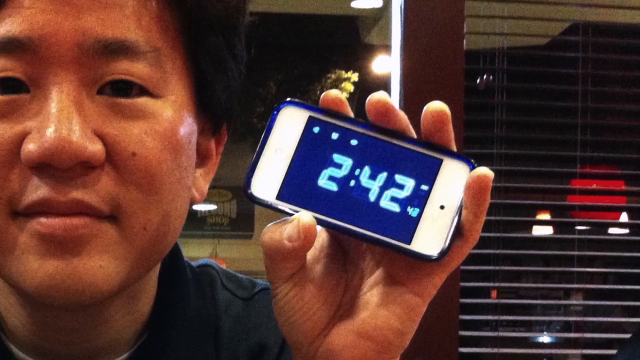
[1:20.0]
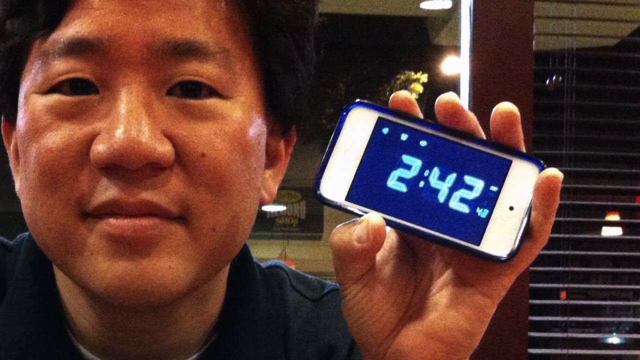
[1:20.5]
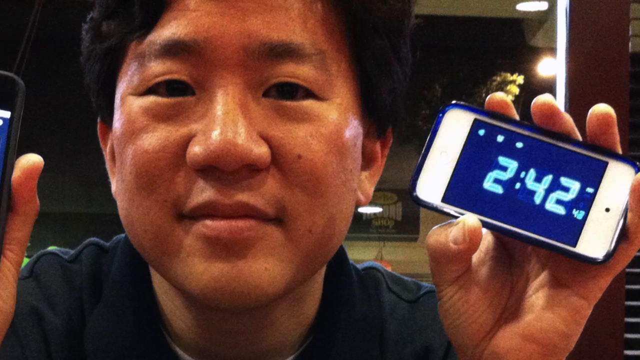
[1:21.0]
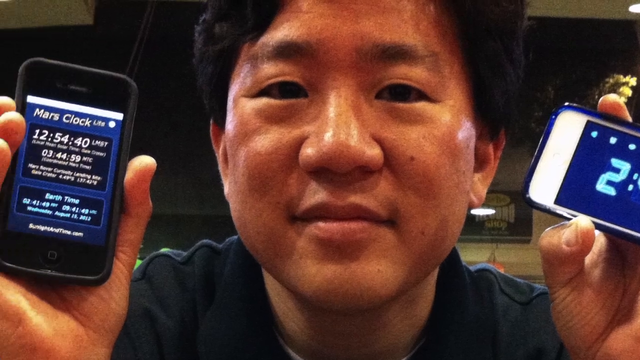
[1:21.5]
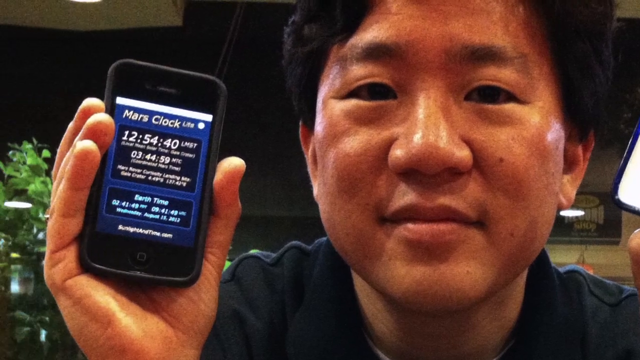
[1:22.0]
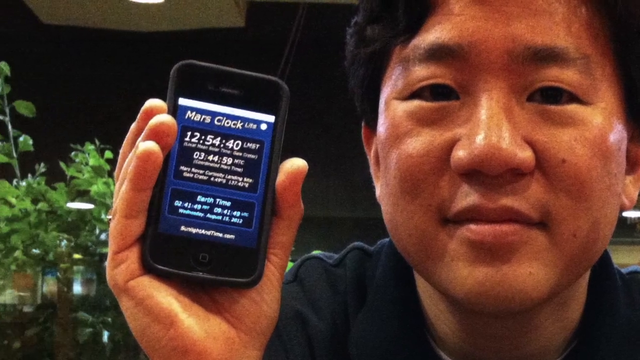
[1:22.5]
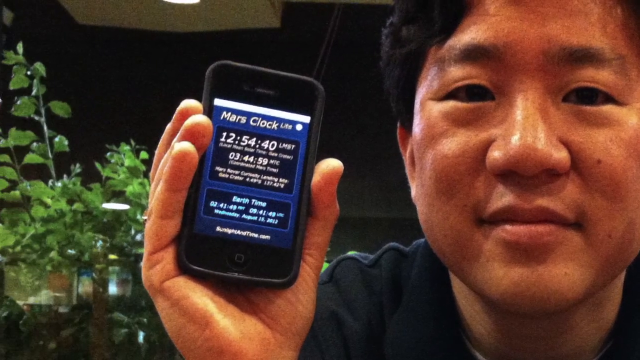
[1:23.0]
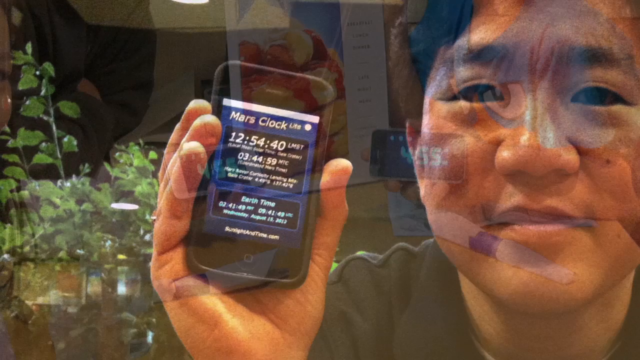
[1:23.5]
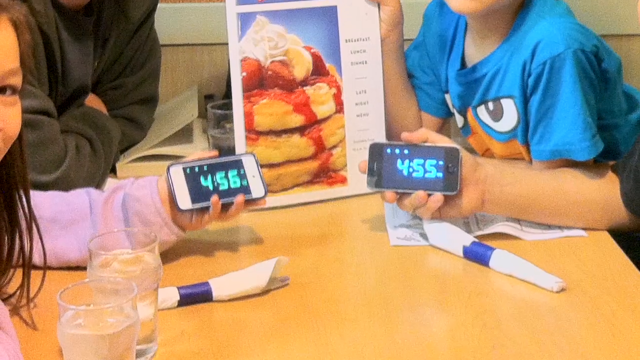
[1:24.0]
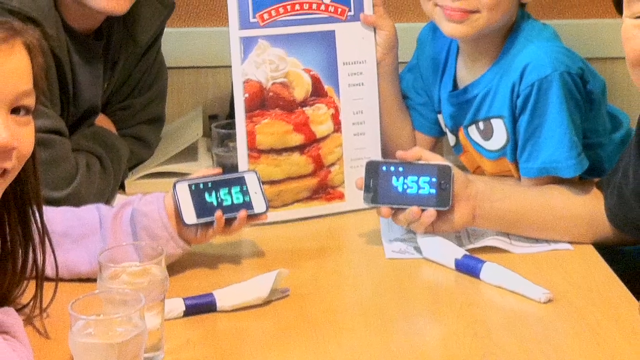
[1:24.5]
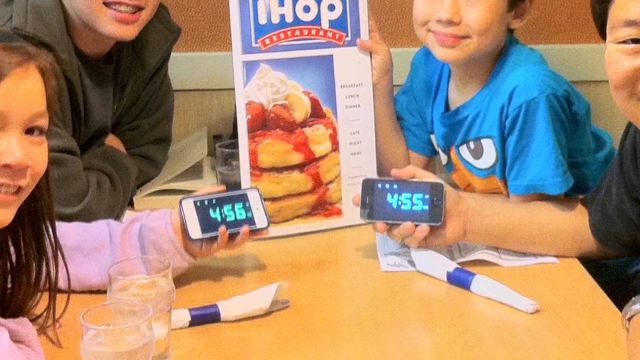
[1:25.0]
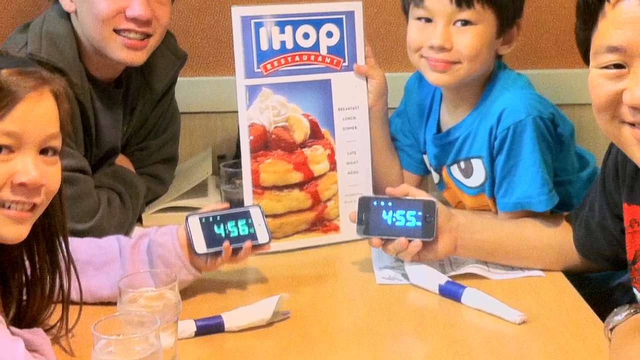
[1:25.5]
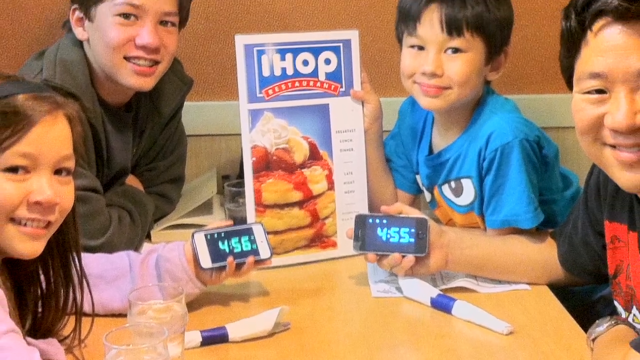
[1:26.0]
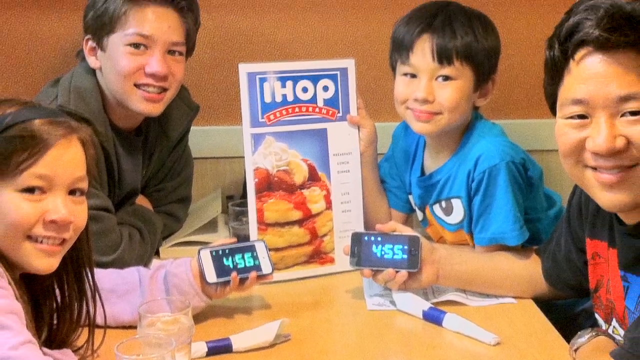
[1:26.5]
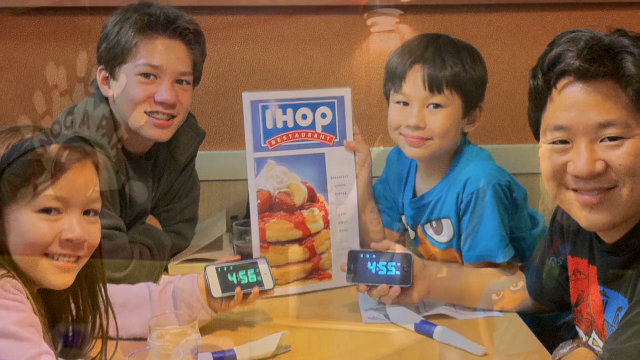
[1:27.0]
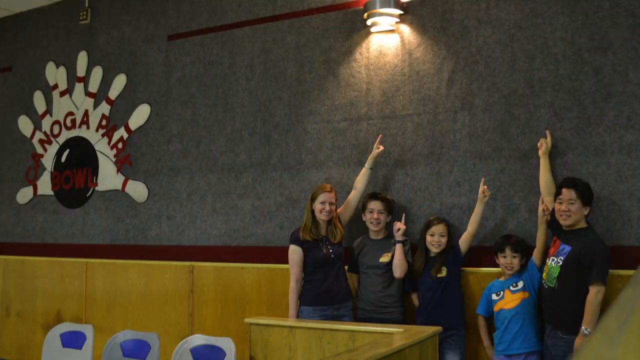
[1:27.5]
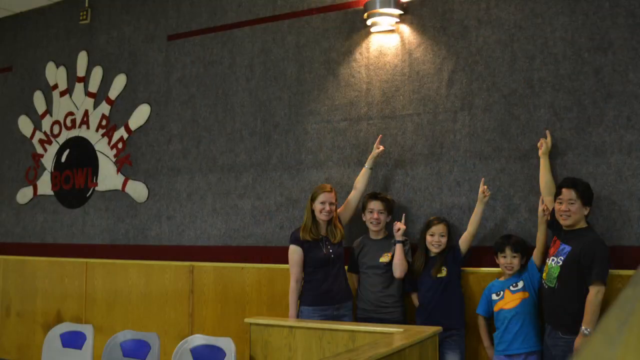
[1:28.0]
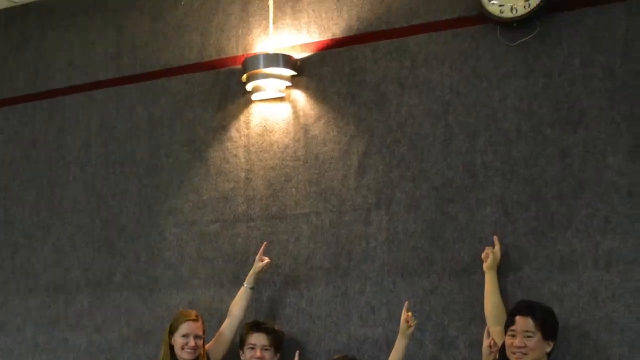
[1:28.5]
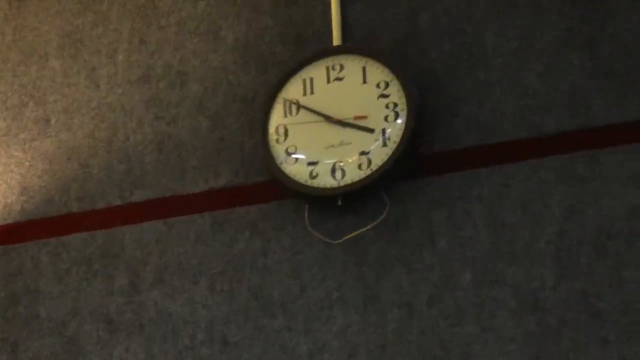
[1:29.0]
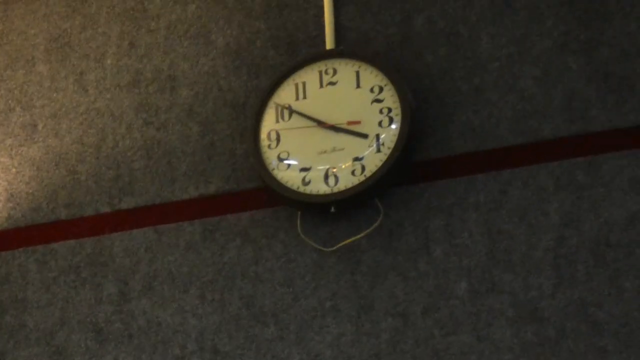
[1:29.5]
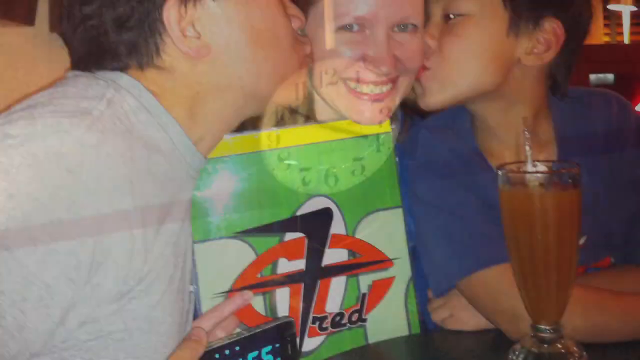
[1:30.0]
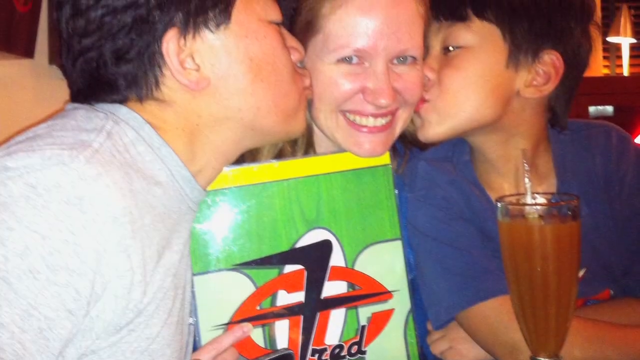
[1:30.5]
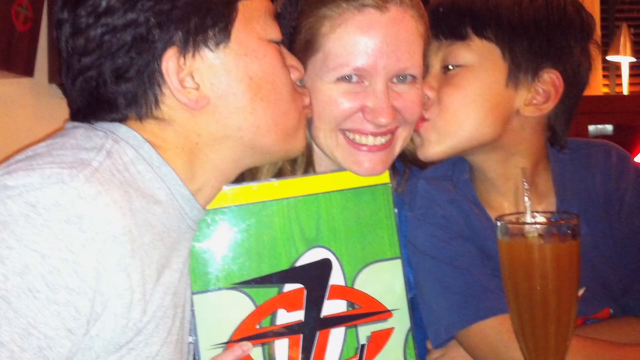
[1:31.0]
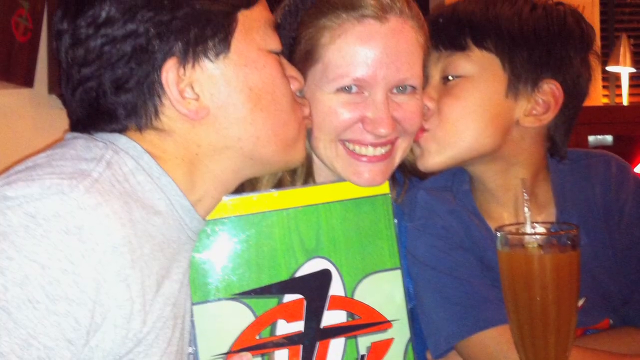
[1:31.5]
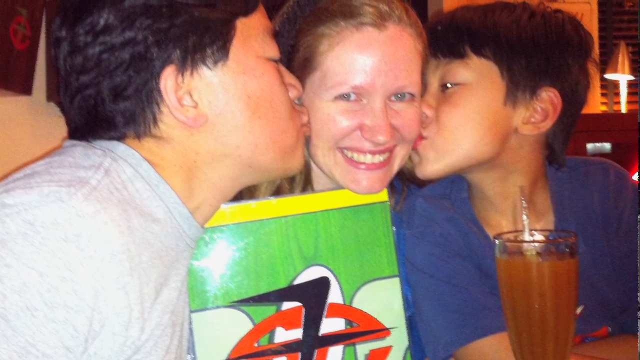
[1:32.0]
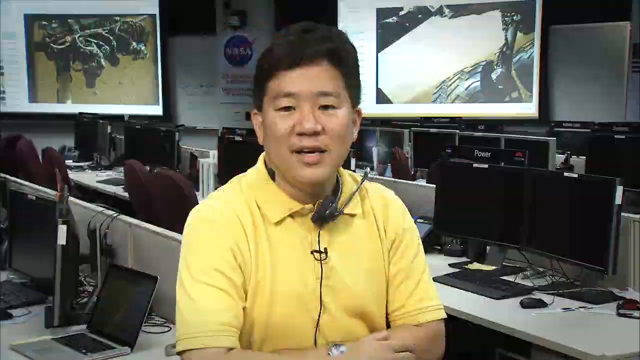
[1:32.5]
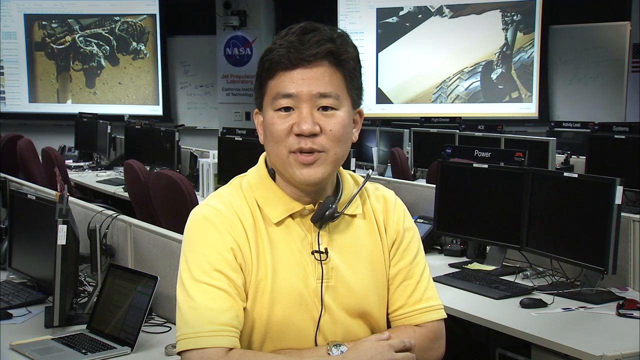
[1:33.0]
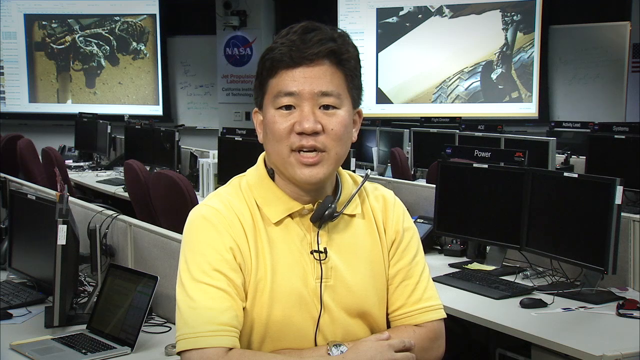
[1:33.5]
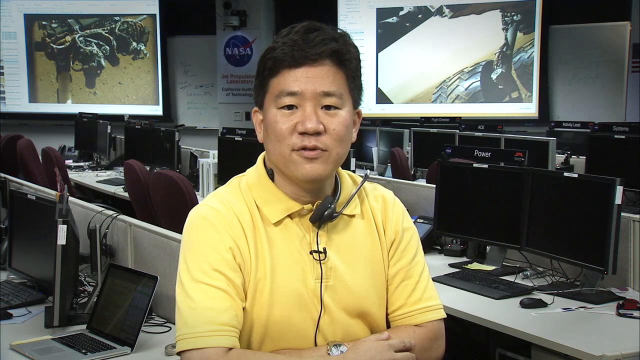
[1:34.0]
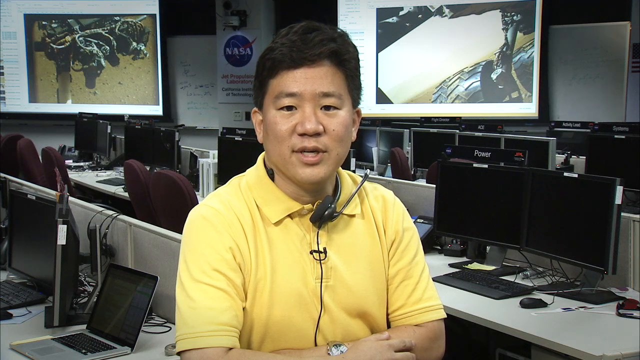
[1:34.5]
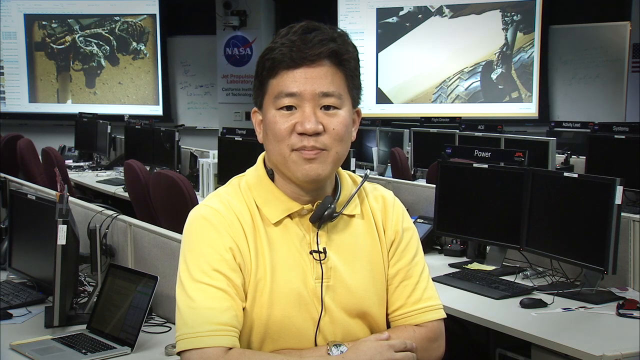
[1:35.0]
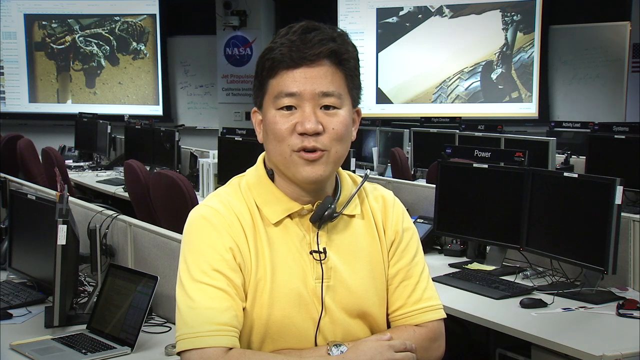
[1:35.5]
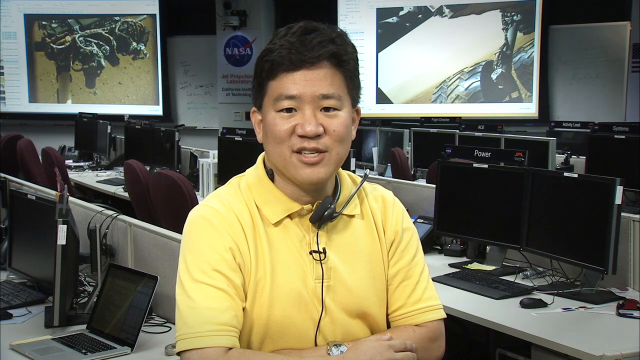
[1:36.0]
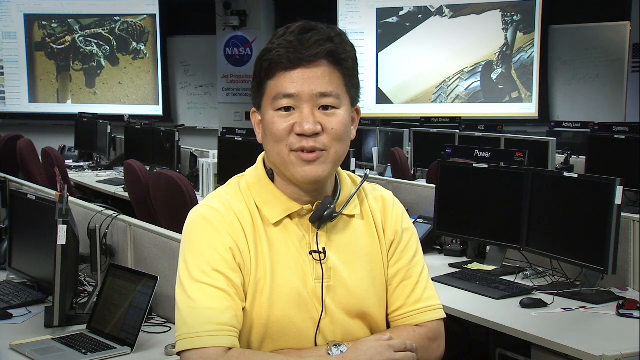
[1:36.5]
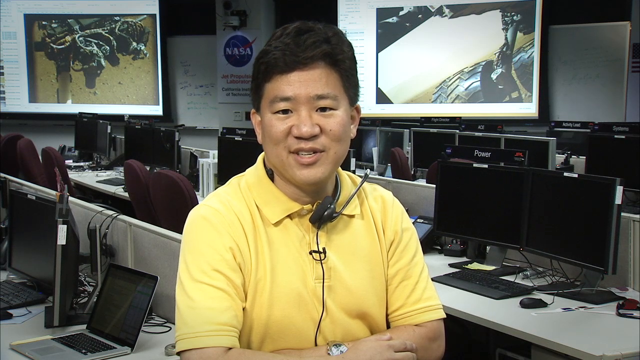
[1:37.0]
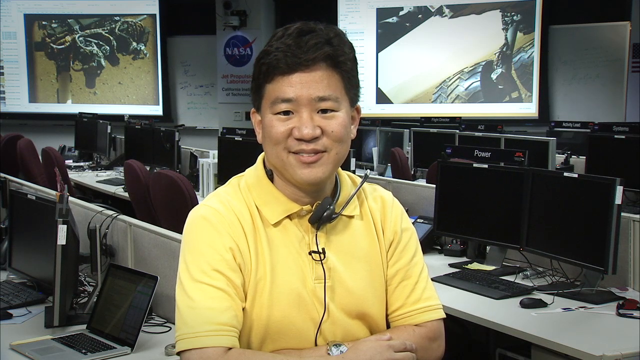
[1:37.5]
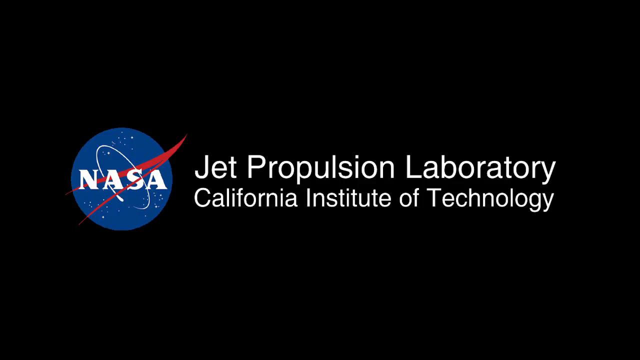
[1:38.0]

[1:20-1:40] A middle-aged Asian man's face is in close-up on the far left-hand side of the screen. In his left hand he holds up an iPhone showing a dark blue digital clock face with white letters reading "2:42." Behind his hand are some slatted lines and, further on, a light in the room behind him. The camera pans to the left, where in his right hand he holds another iPhone that says "Mars Clock," with the number "12-54-40" at the top and small print below reading "Earth Time." The scene fades to four children grouped around a table in a restaurant. On the left-hand side is a little girl in a pink coat with long brown hair, and next to her near the wall is a boy in a green coat leaning on the table with his arms. On the right-hand side, in the back toward the wall, an Asian boy in a blue t-shirt holds up an IHOP restaurant menu, and next to him an Asian man holds an iPhone that says "4:55." They all look at the camera and smile. The image then changes to four children and a woman standing grouped on the lower right-hand side, everyone pointing up with their left hand except the man on the far right, who points up with his right hand. A light is on the gray wall above them. To the left on the screen are a number of bowling pins, with text reading "Canoga Park," and the pins are struck by a bowling ball. The image flashes up to the clock, which says "4:20." Two Asian men kiss a white woman on her cheeks. At the end, the Asian man in the yellow t-shirt appears again, and the video ends with the logo of the Jet Propulsion Laboratory, California Institute of Technology, and the NASA logo in blue beside it.